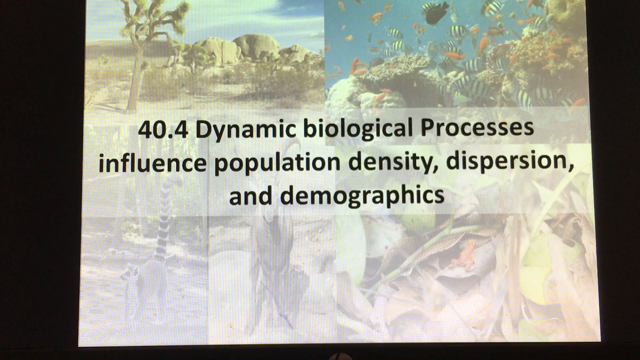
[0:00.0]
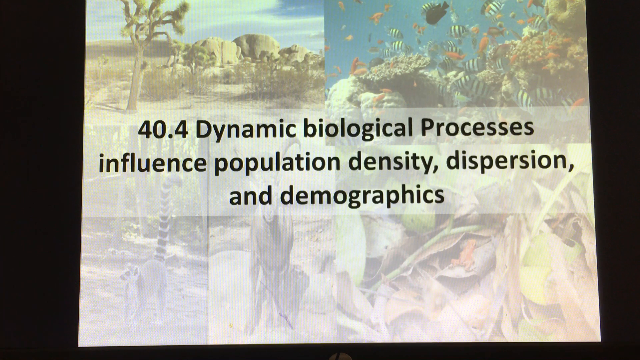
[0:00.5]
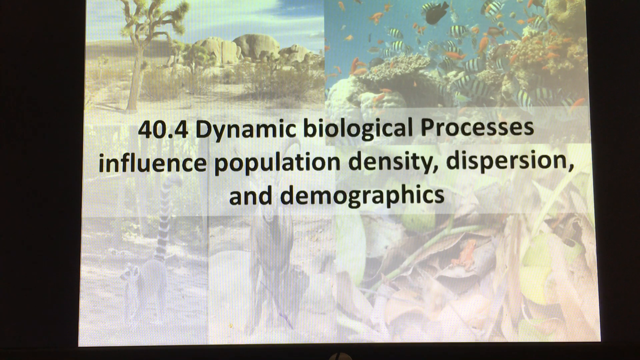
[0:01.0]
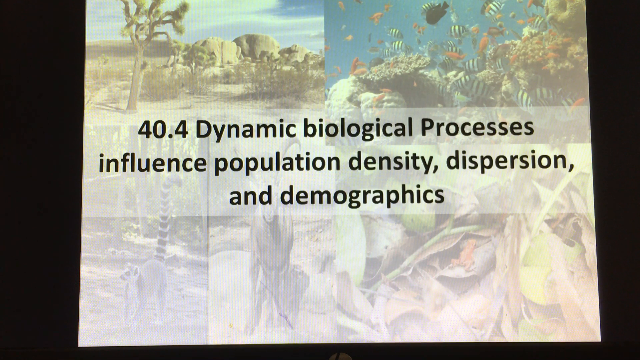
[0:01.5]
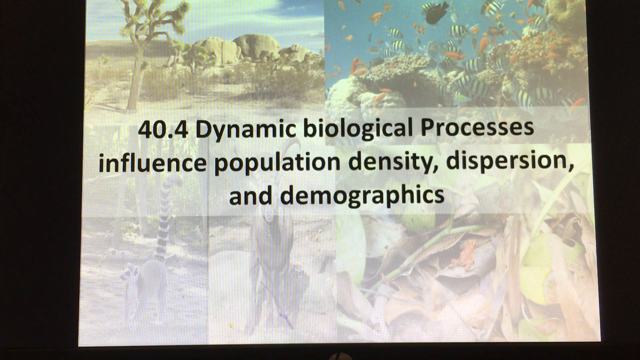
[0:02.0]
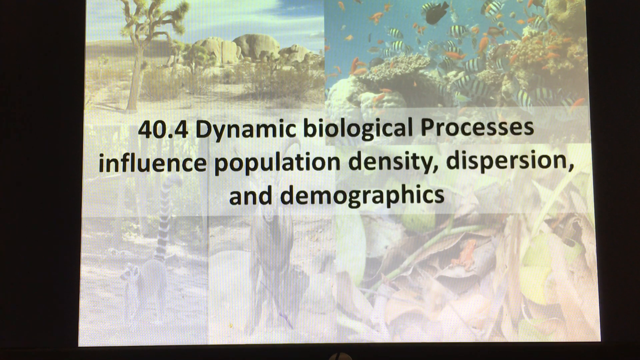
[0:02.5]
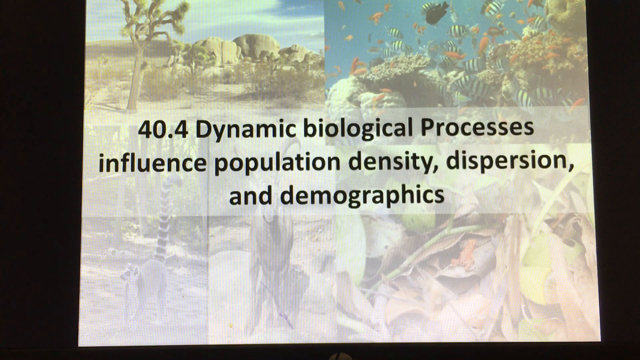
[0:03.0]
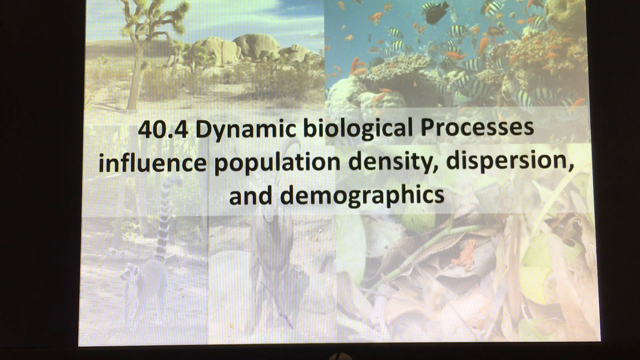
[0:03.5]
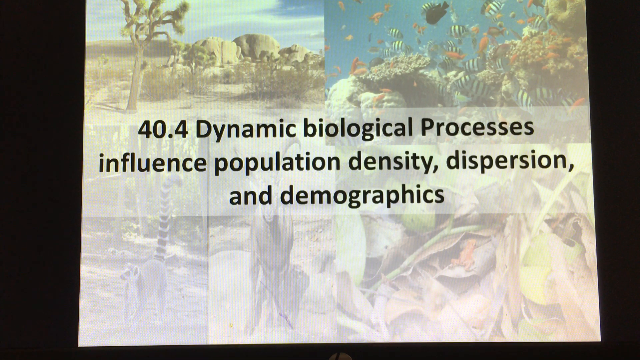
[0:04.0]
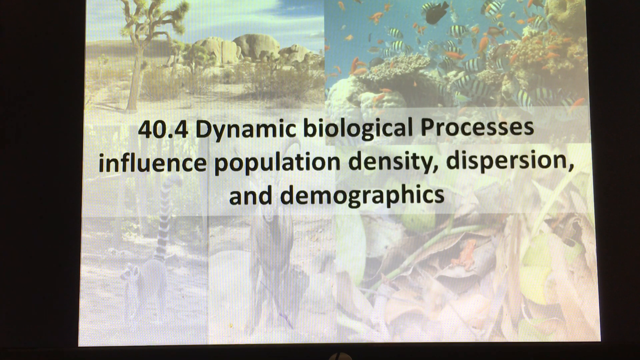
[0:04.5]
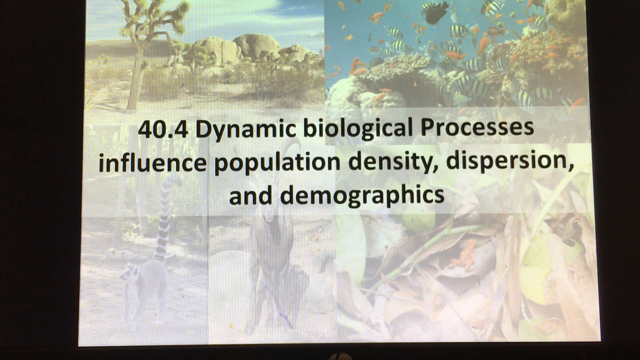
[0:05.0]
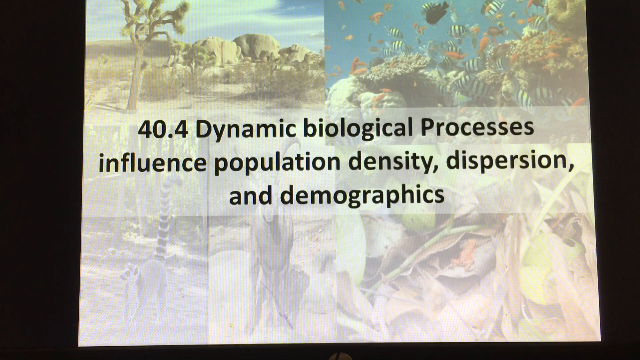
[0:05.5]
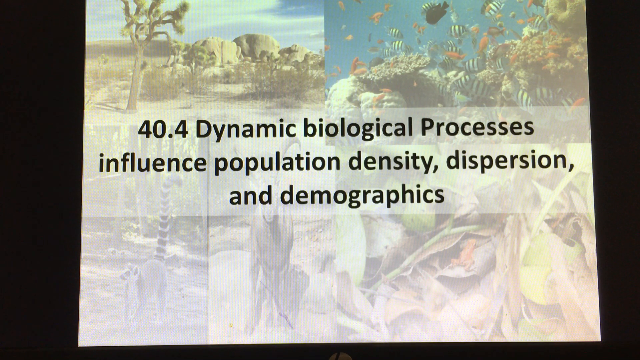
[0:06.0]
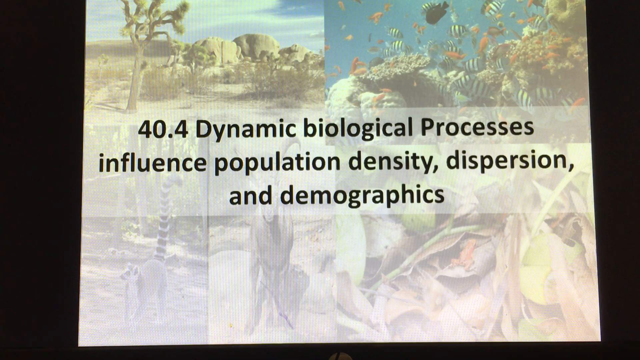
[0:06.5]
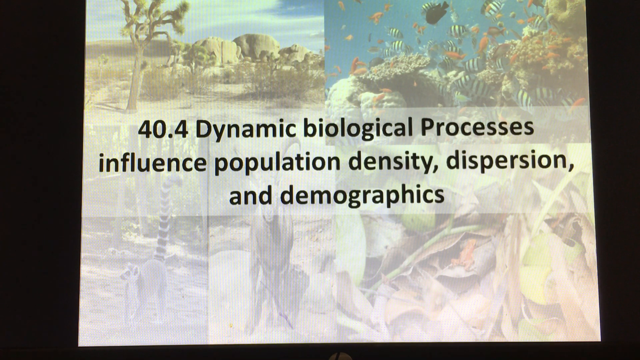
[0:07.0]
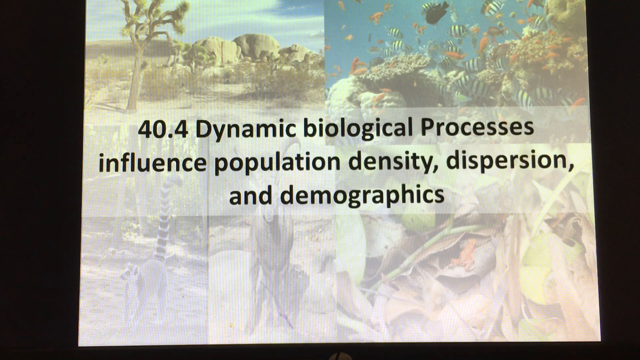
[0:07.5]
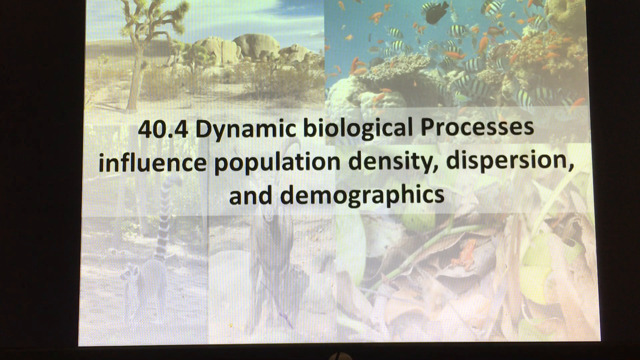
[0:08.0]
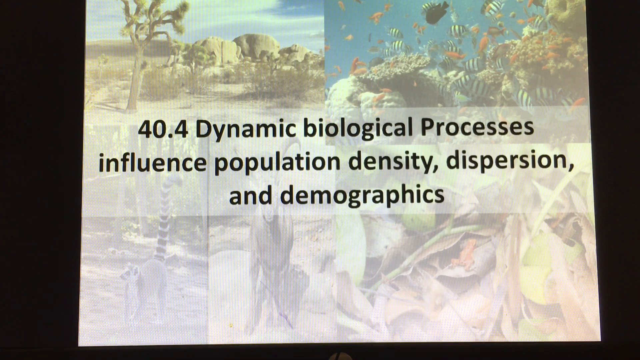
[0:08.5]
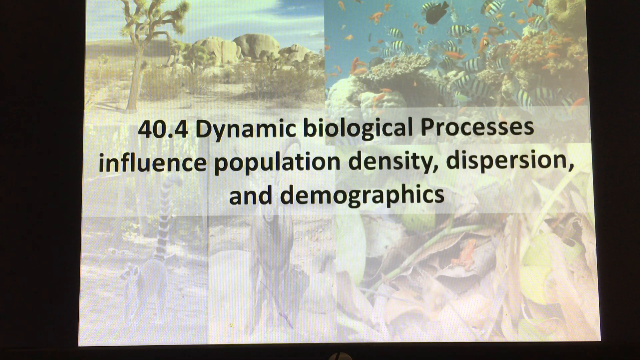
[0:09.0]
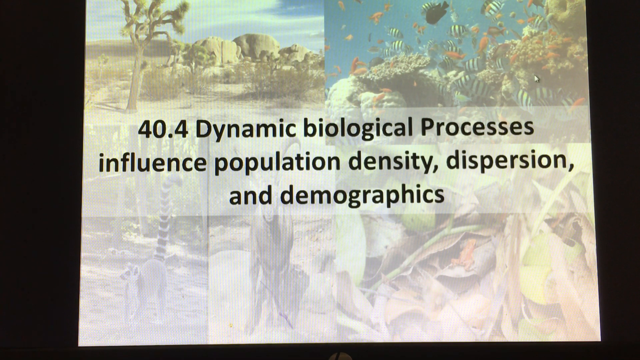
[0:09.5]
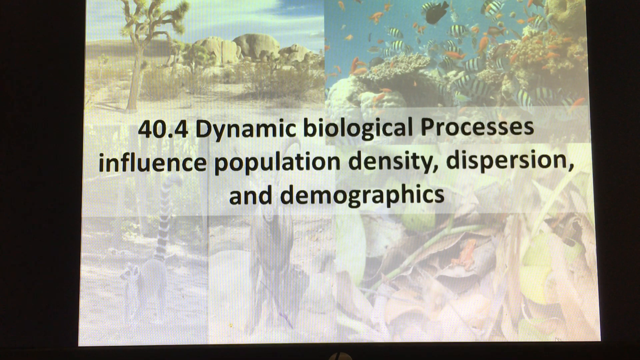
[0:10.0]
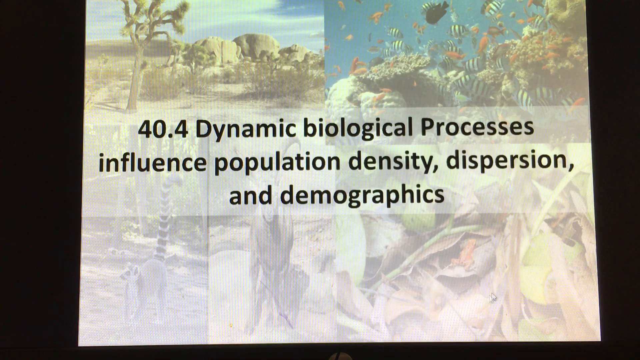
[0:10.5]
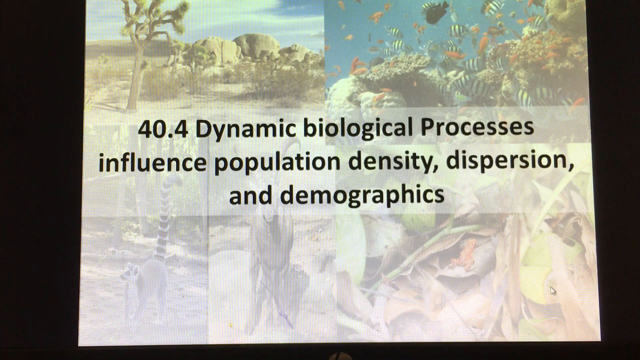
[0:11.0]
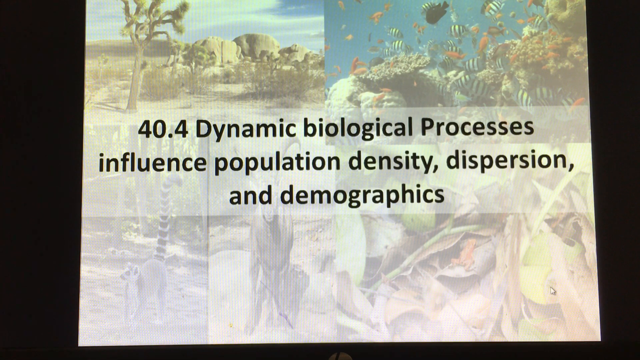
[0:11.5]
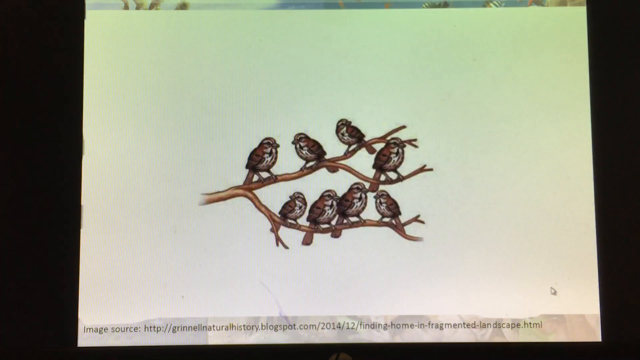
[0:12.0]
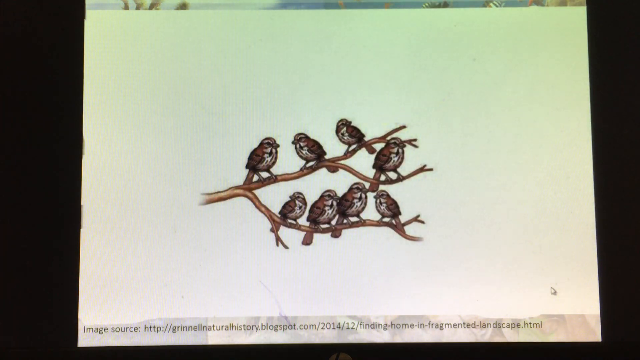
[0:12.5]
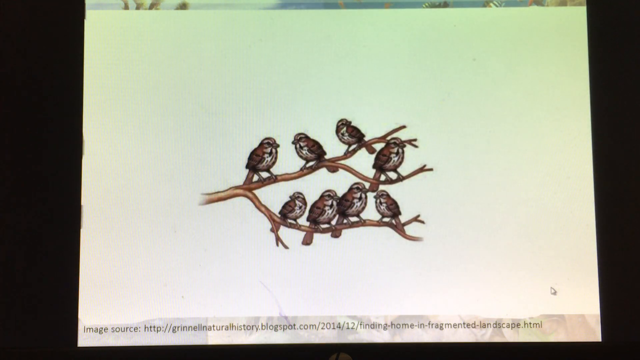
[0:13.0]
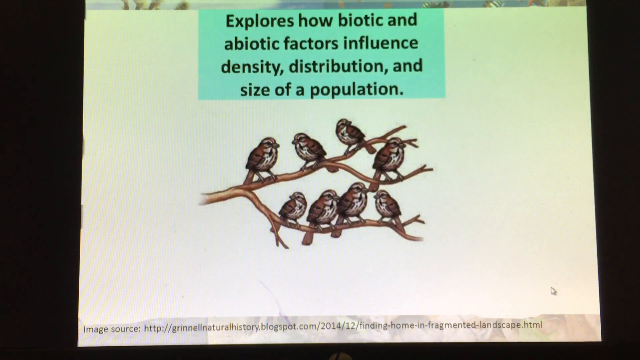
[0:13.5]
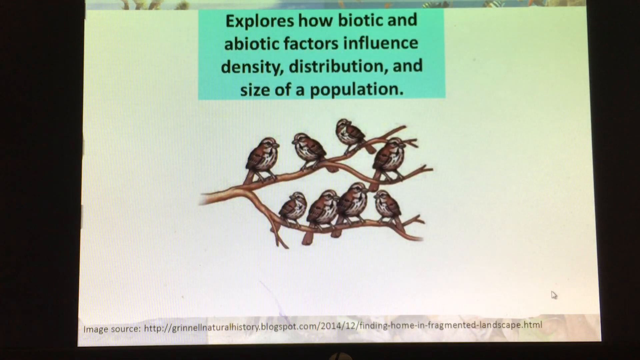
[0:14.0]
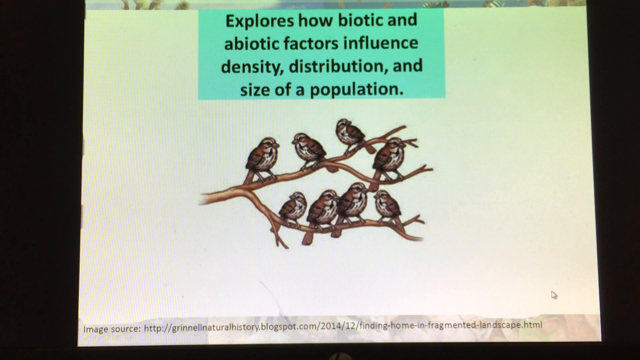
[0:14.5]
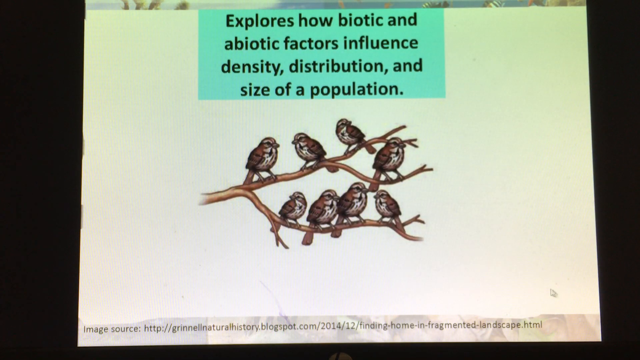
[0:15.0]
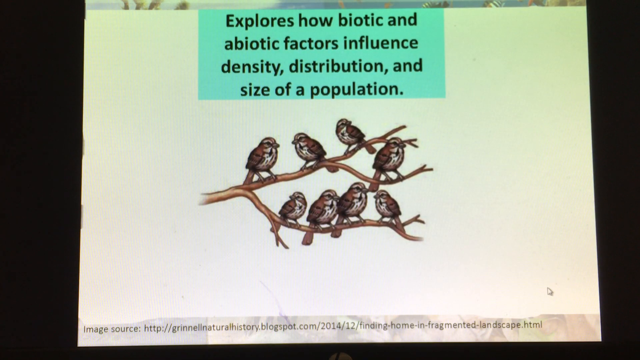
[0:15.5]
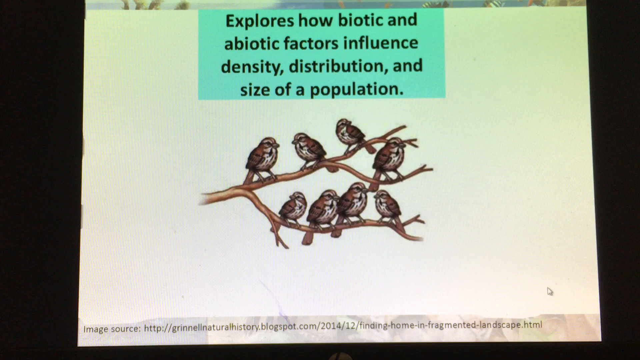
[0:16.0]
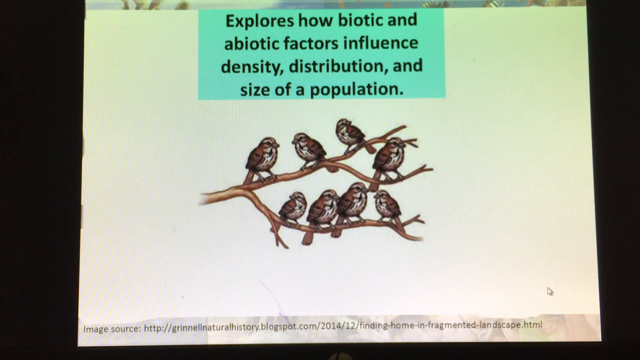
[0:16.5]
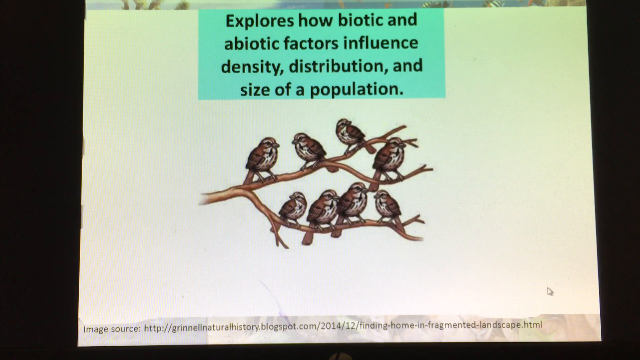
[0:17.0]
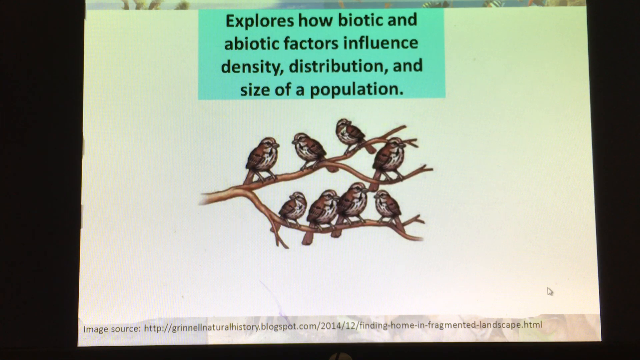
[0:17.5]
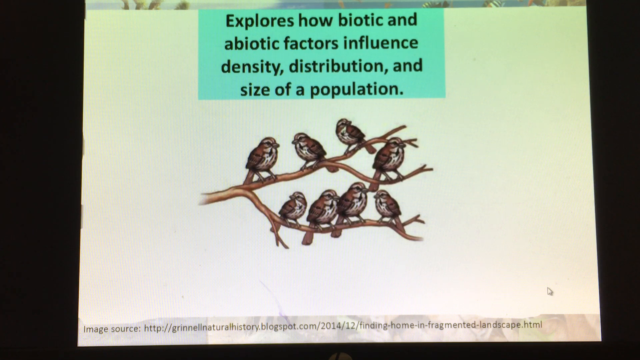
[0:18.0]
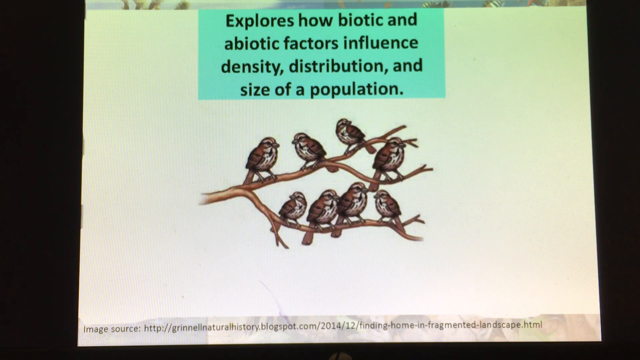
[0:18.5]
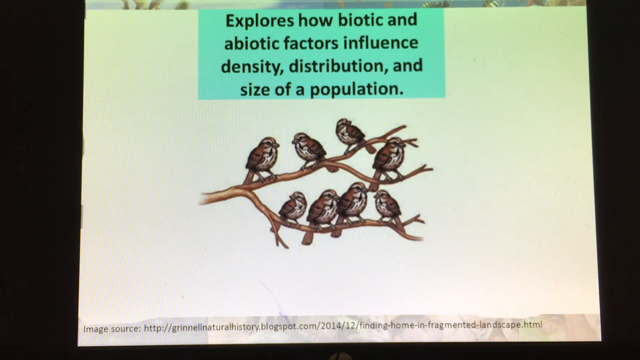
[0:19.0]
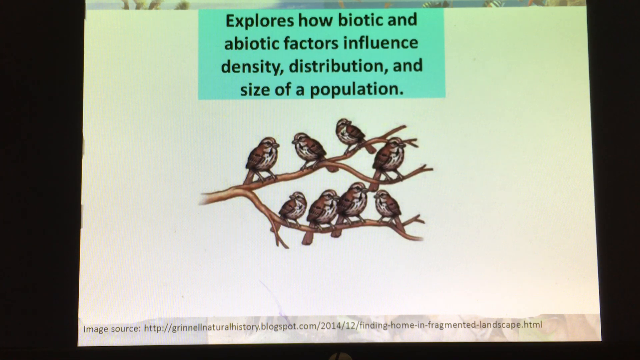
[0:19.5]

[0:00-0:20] The video opens on what looks like a slide reading "40.4 dynamic biological processes influence population density, dispersion, and demographics." The slide stays unchanged for a while. It then changes to a slide with a picture of eight birds on branches and the text "explores how biotic and abiotic factors influence density distribution and size of a population." It seems to be a video recording of a presentation rather than a presentation captured on screen. The picture shows brown branches: three branches, one large one and one that splits off from another. Three birds are on one branch, one is on the small branch, and four are on the lower branch. The birds look like wrens; they are brown with a little white tuft on the chest and stomach.